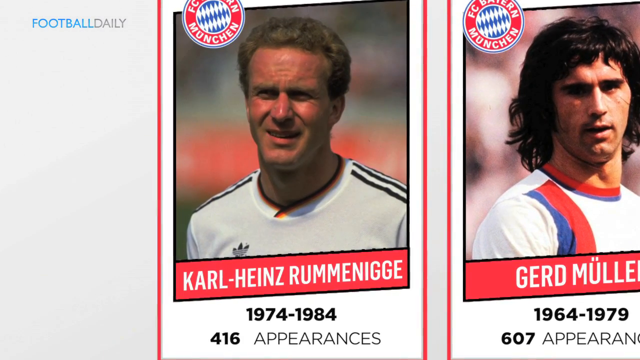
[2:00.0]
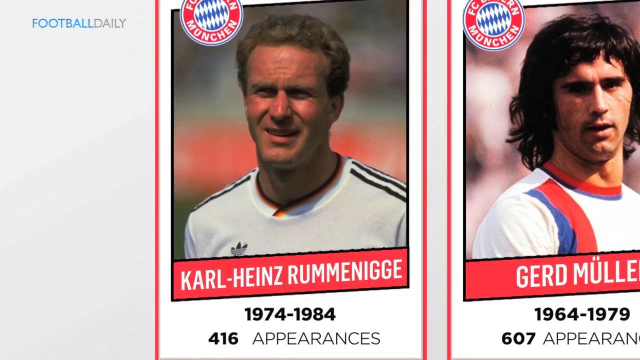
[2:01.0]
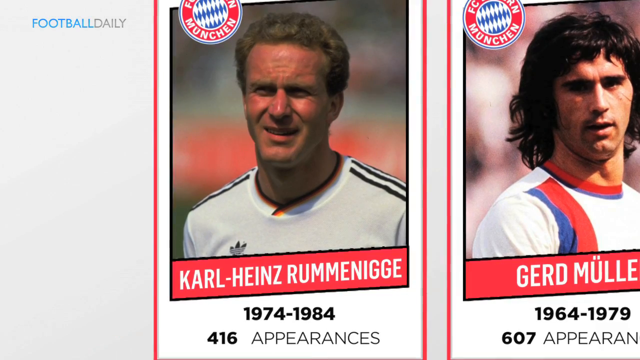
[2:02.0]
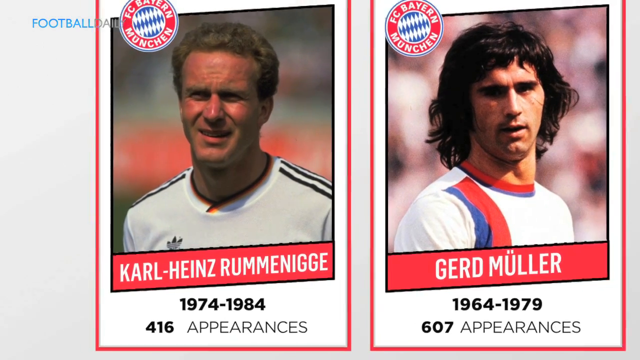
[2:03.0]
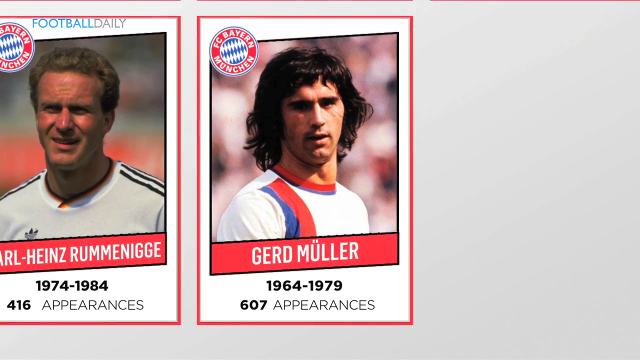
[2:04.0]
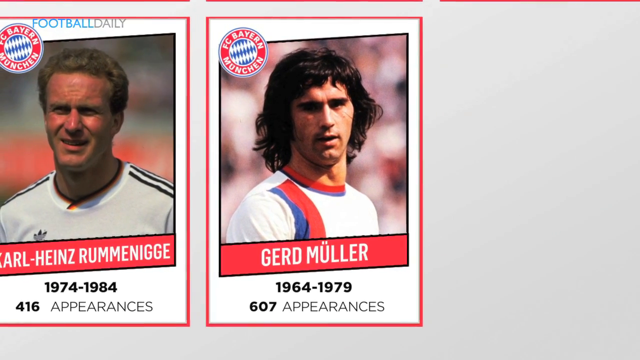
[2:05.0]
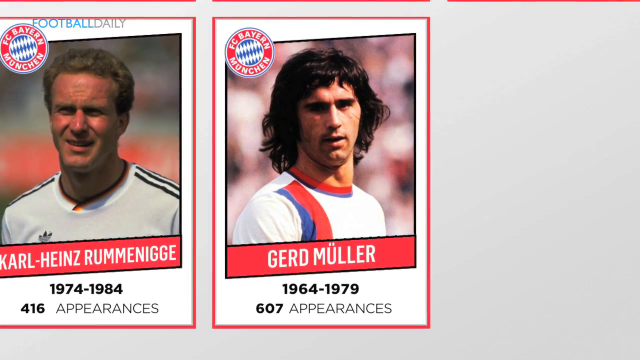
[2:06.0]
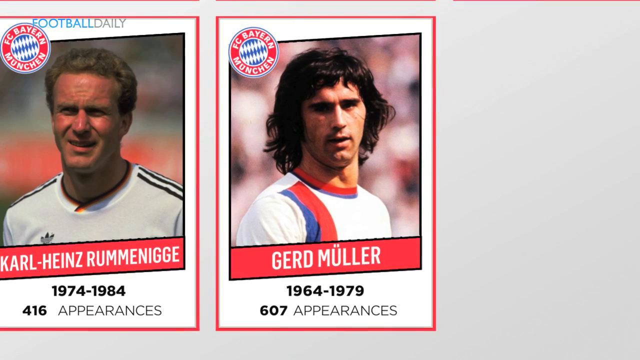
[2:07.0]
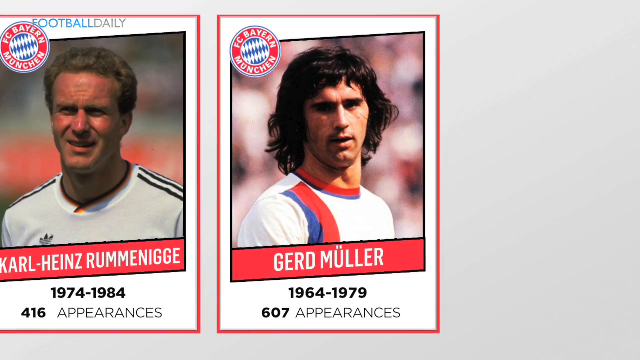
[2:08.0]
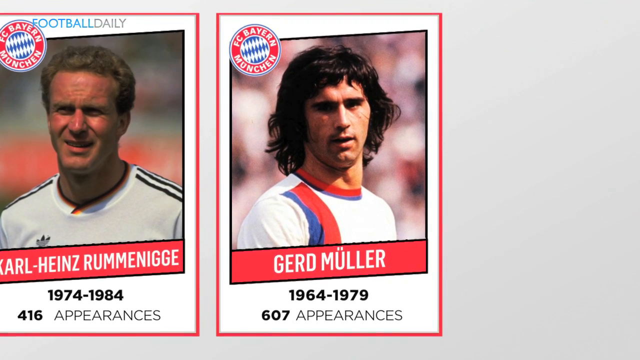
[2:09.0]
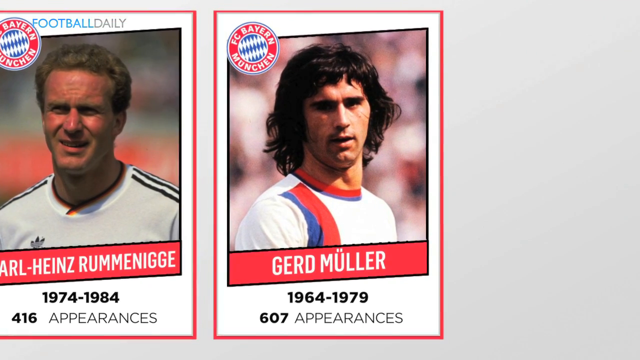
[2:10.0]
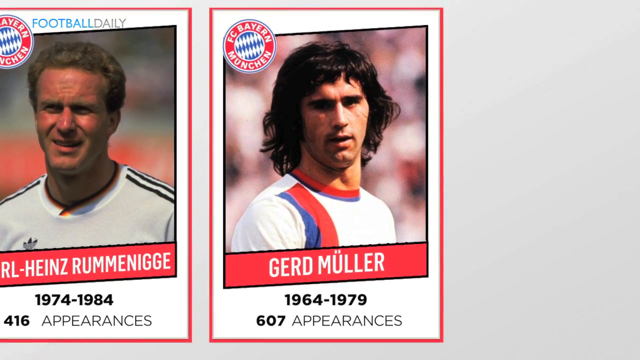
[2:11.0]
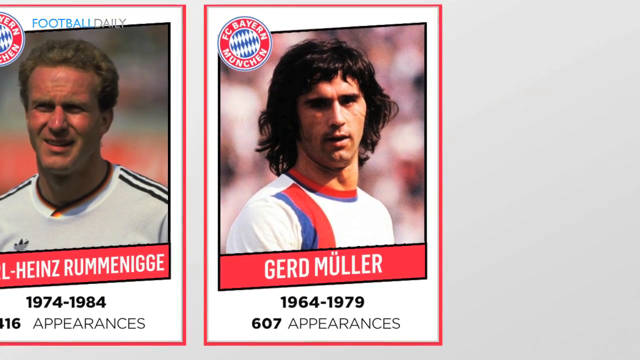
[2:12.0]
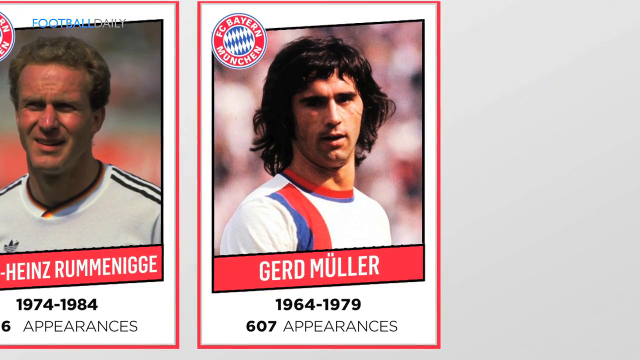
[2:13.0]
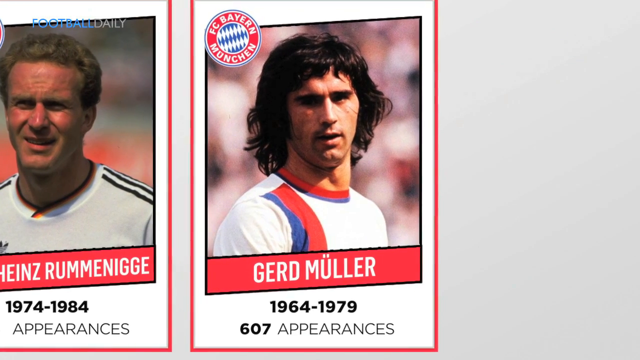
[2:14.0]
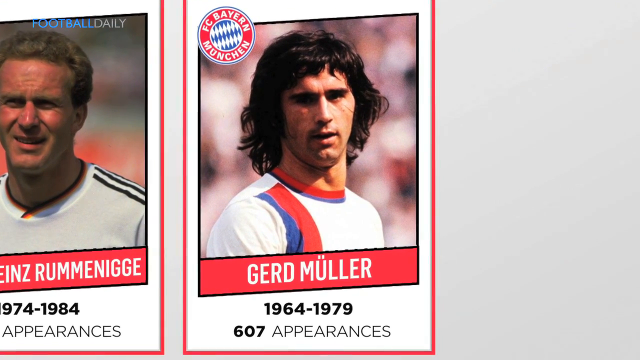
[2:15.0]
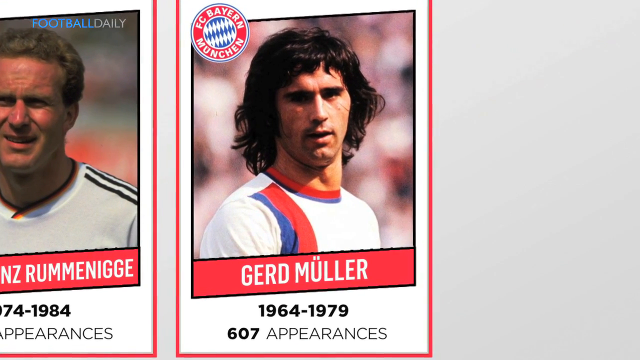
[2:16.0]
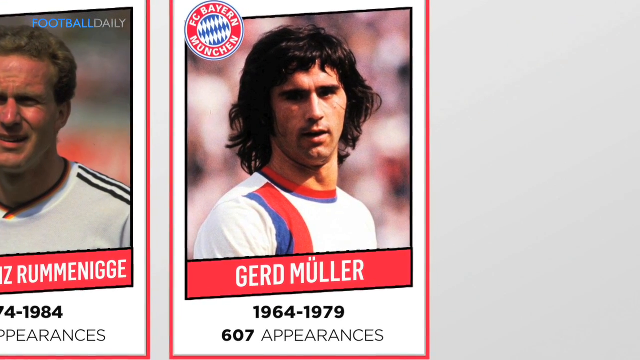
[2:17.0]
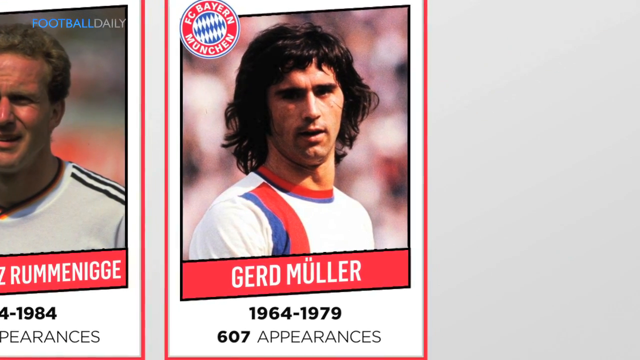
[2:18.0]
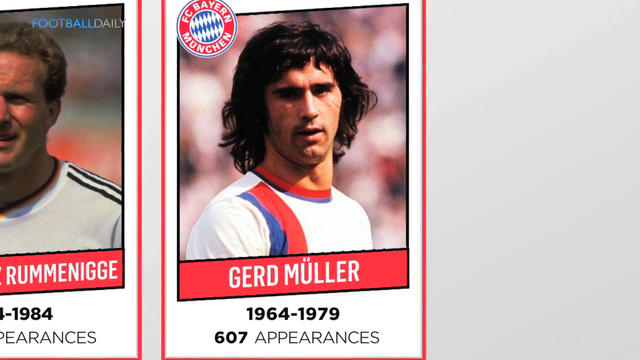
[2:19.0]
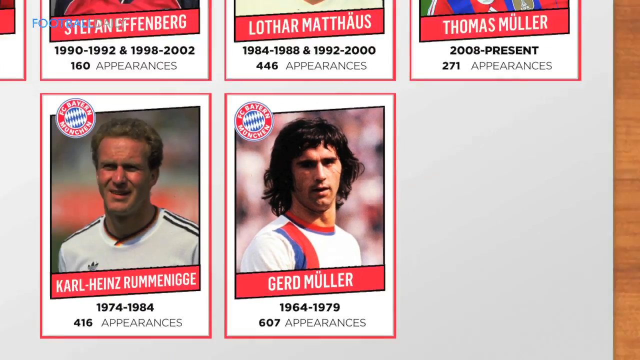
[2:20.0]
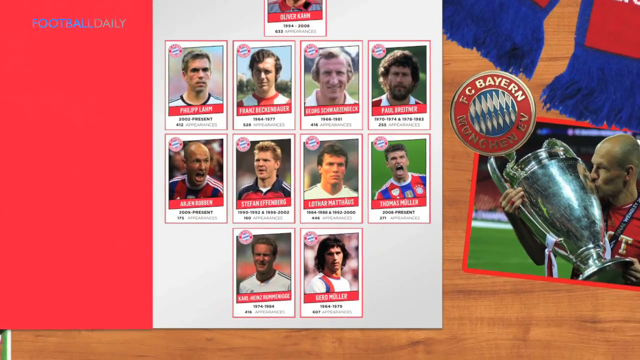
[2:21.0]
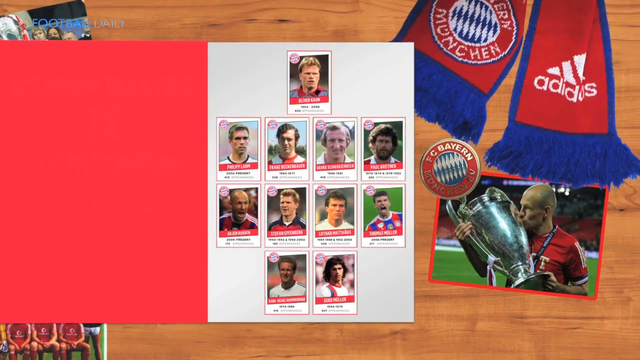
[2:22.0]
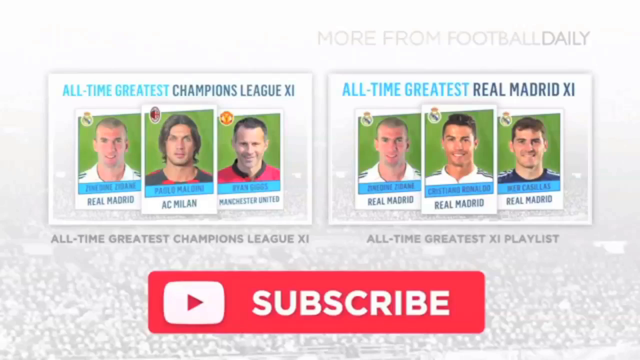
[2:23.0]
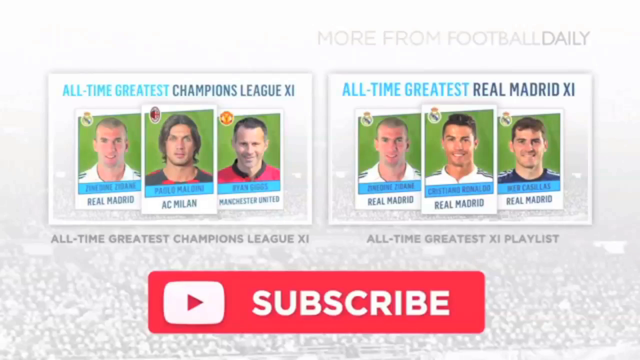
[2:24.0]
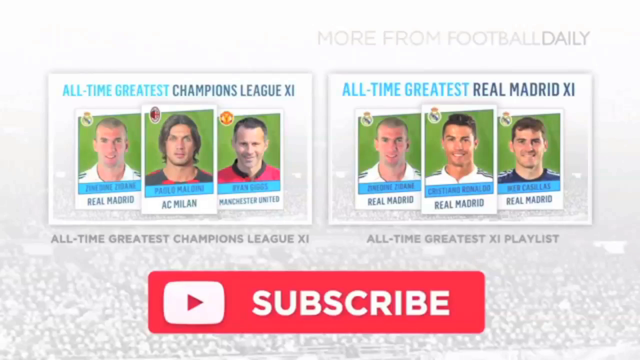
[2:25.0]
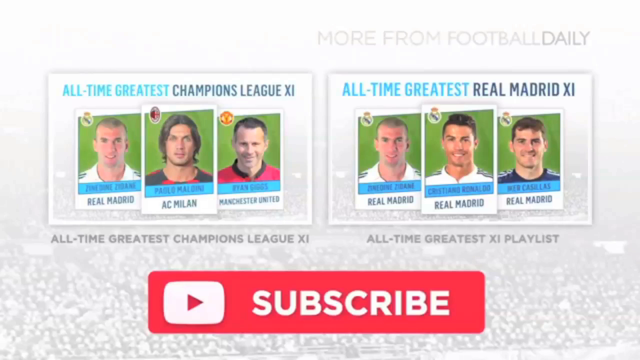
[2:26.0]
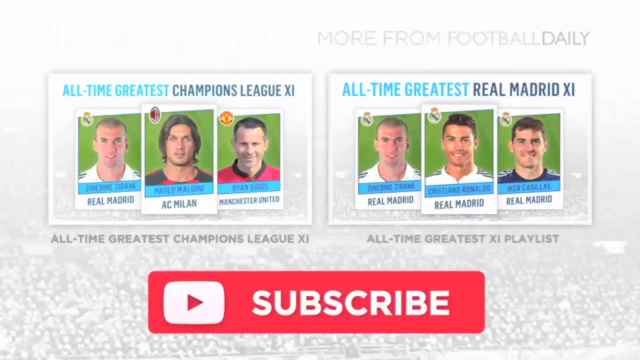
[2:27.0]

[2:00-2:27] The first player in the last row, which holds only two, is shown. "FOOTBALL DAILY" is in the upper left corner in all capital letters, with "FOOTBALL" in blue and "DAILY" in gray. The player is "KARL-HEINZ RUNNENIGGE", with the dates "1974-1984" in bold beneath and "416 appearances". The number of appearances is in bold for every player, but the word "appearances" is not. To his right is "GURD", then apparently "MULLER", whose dates are also in bold: "1964-1979", with "607 appearances".